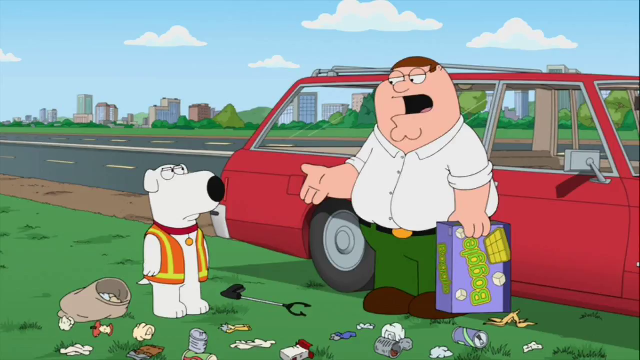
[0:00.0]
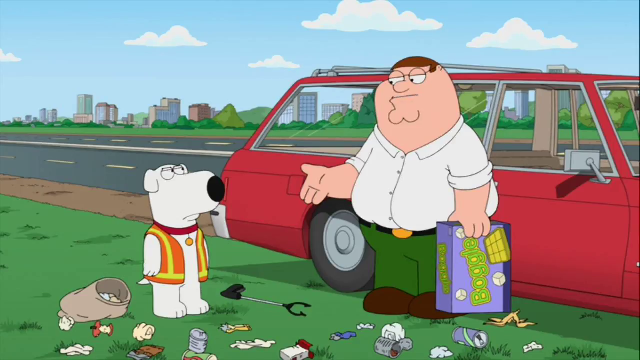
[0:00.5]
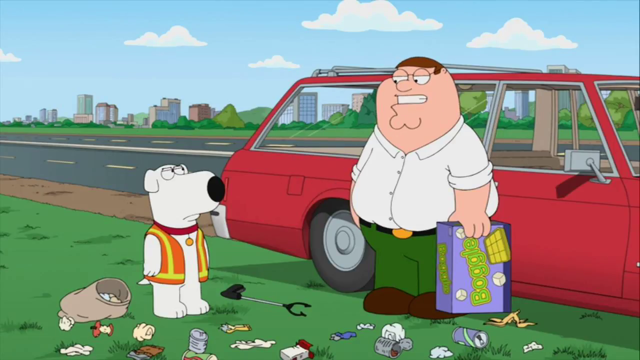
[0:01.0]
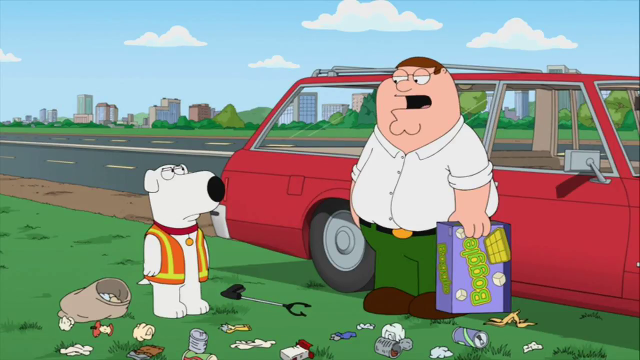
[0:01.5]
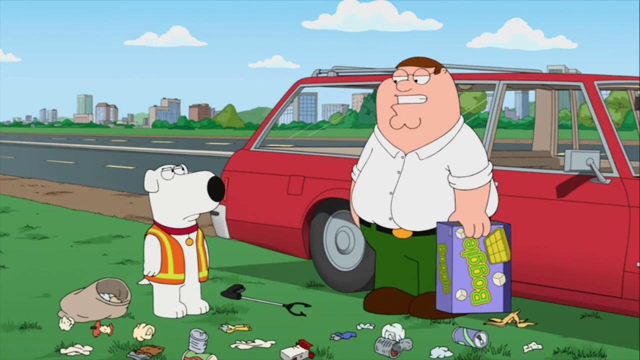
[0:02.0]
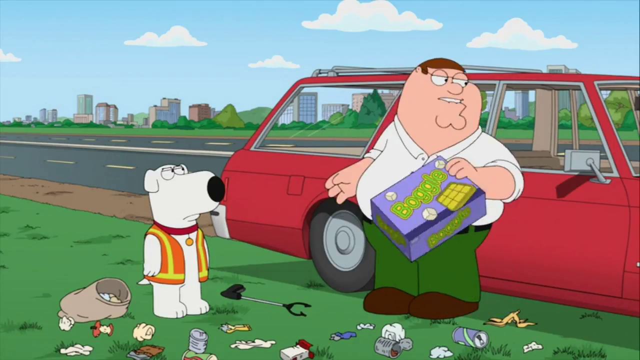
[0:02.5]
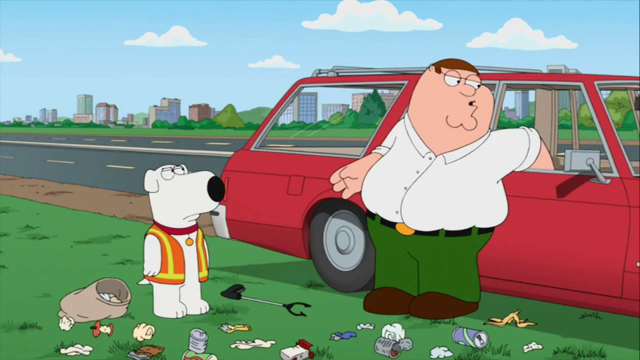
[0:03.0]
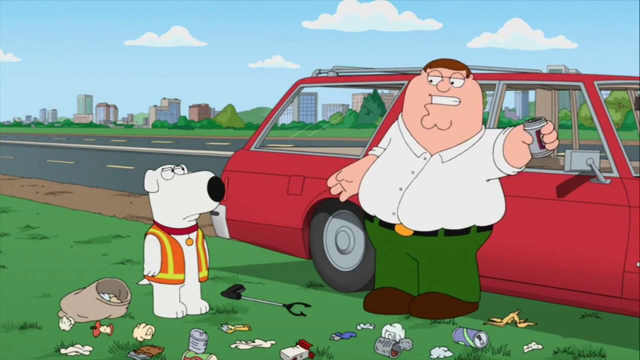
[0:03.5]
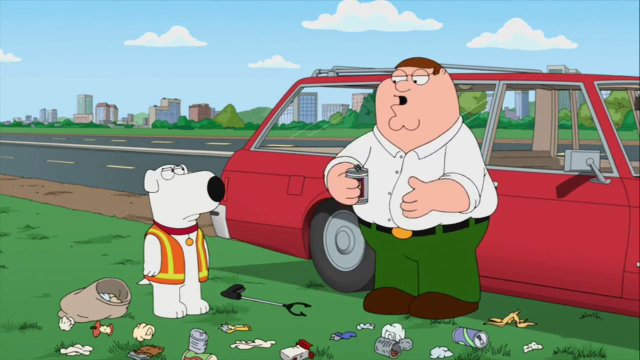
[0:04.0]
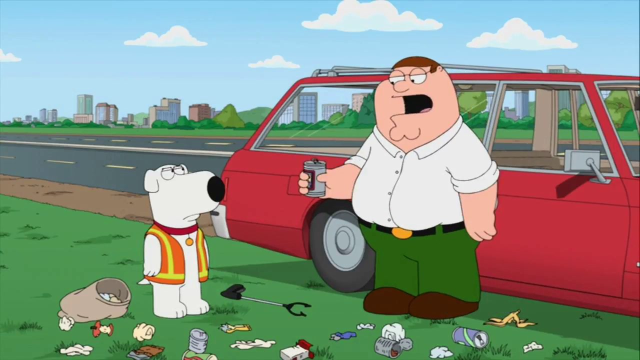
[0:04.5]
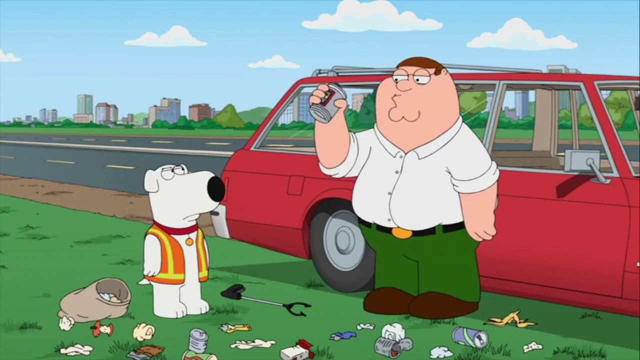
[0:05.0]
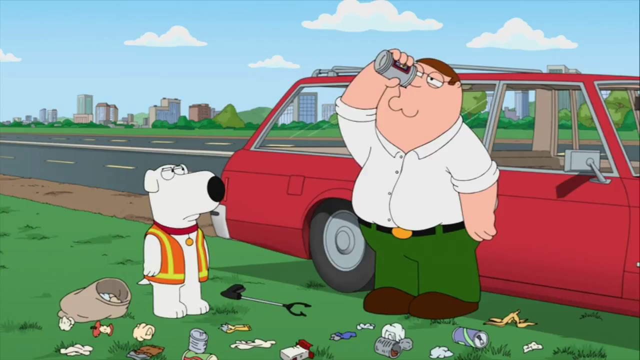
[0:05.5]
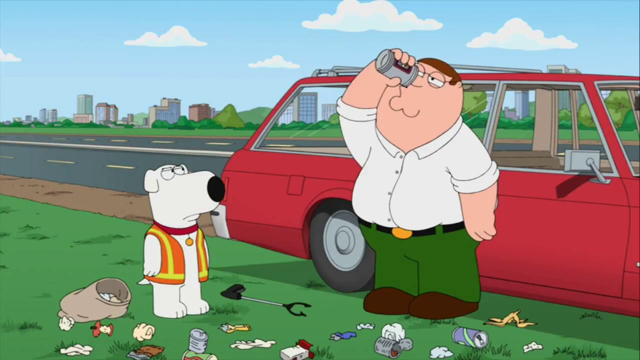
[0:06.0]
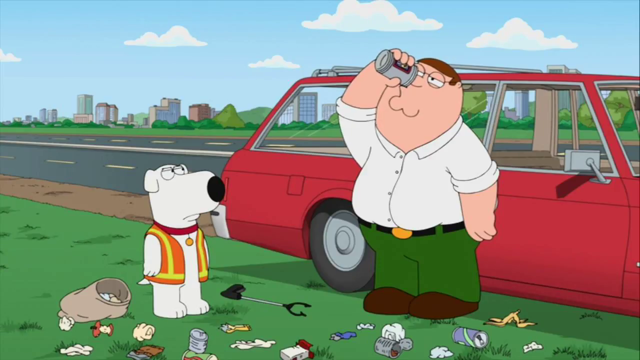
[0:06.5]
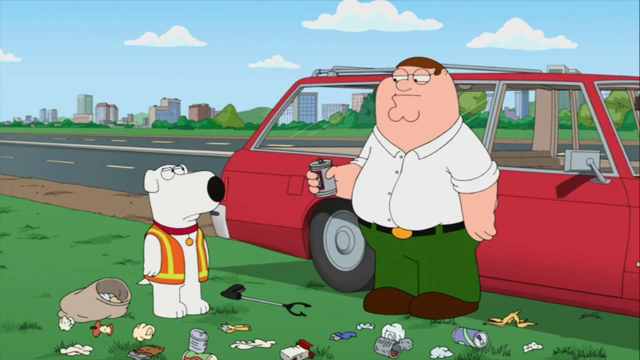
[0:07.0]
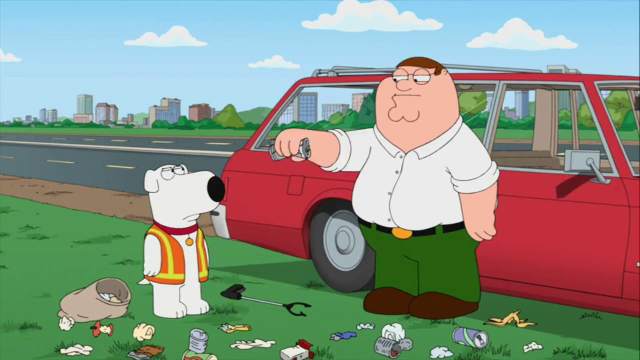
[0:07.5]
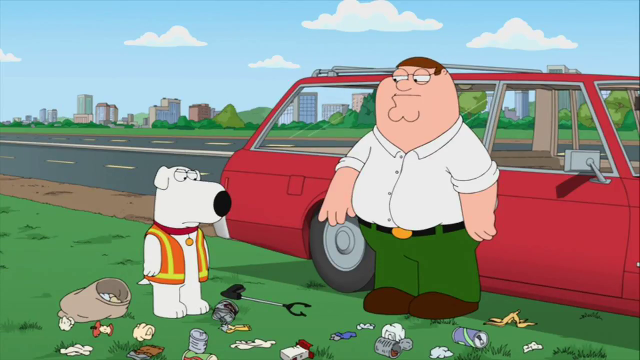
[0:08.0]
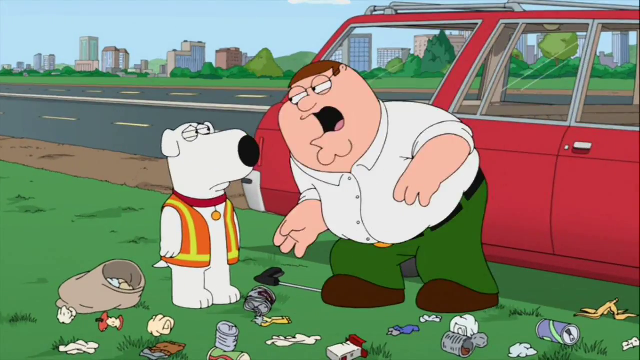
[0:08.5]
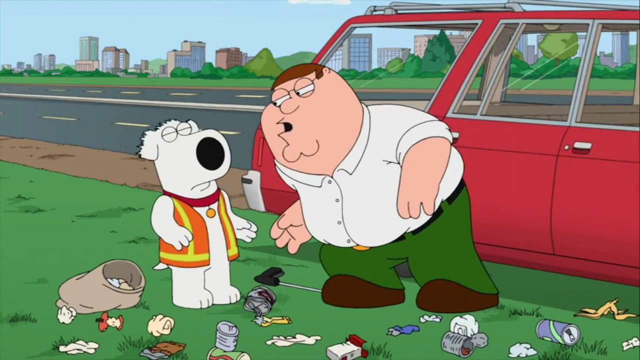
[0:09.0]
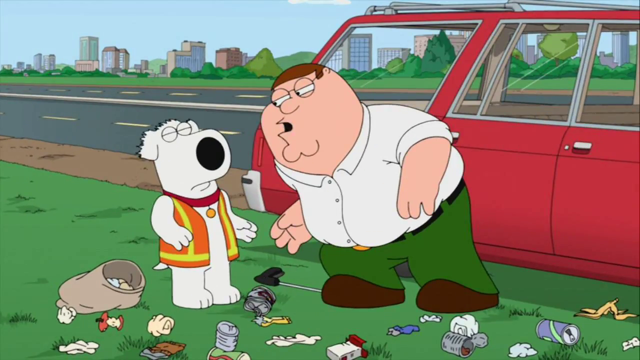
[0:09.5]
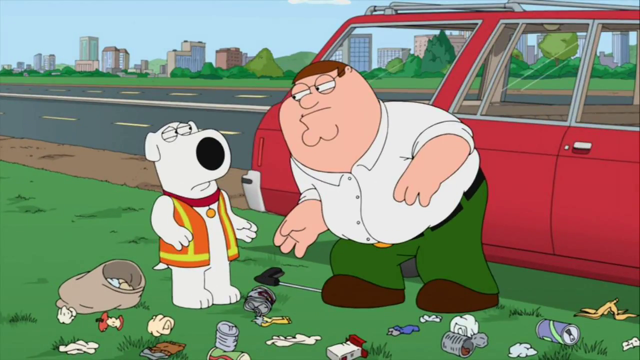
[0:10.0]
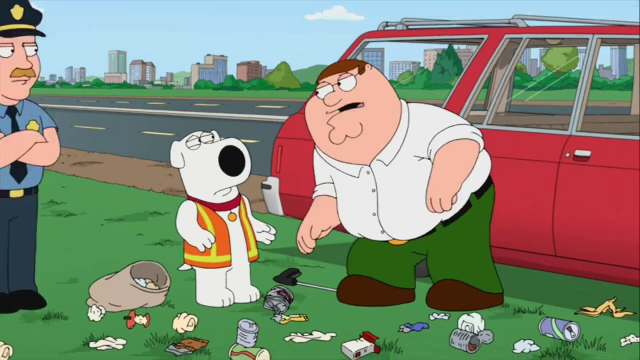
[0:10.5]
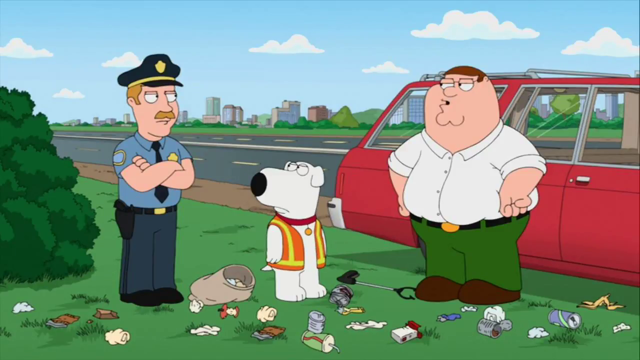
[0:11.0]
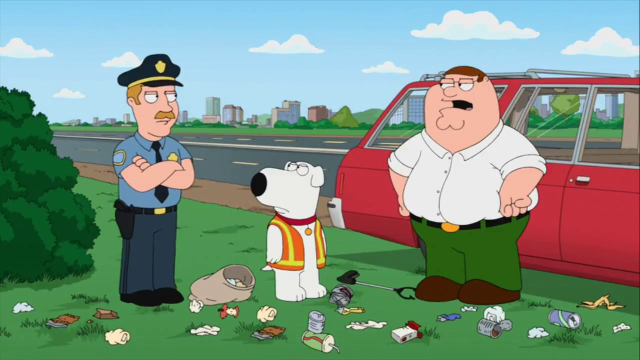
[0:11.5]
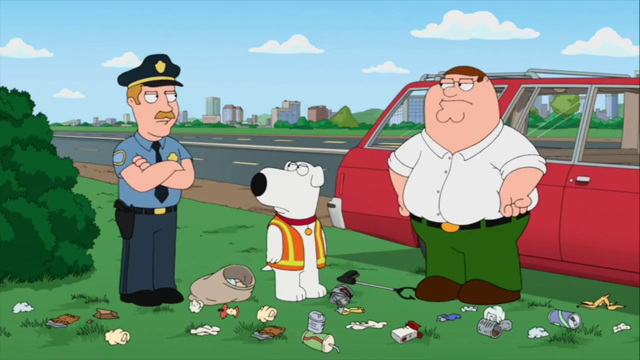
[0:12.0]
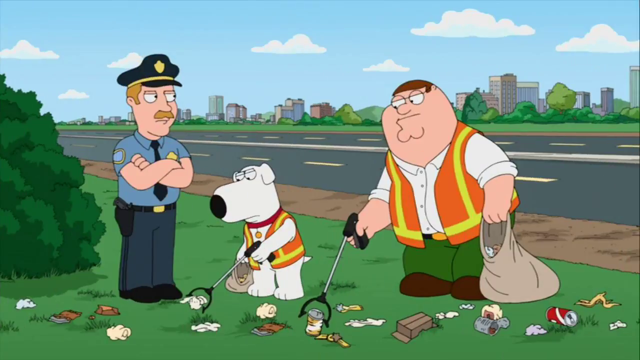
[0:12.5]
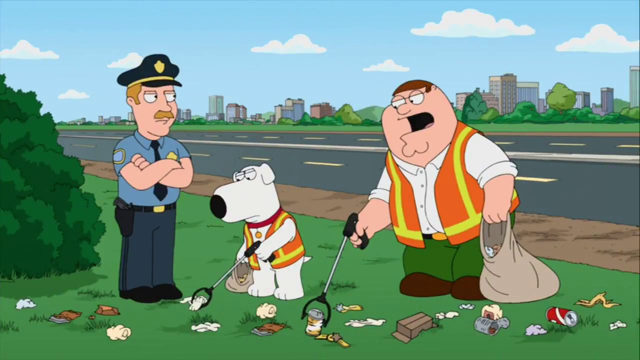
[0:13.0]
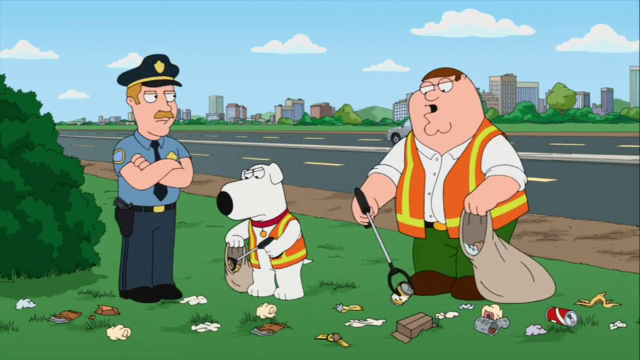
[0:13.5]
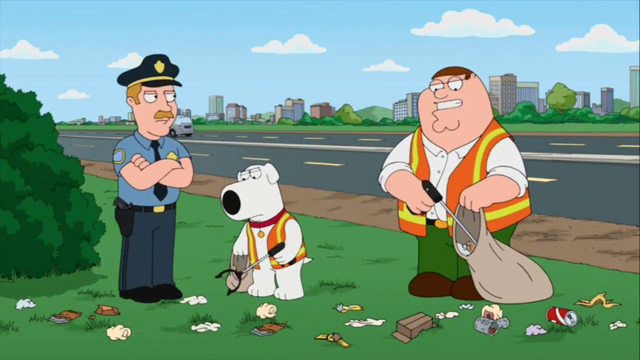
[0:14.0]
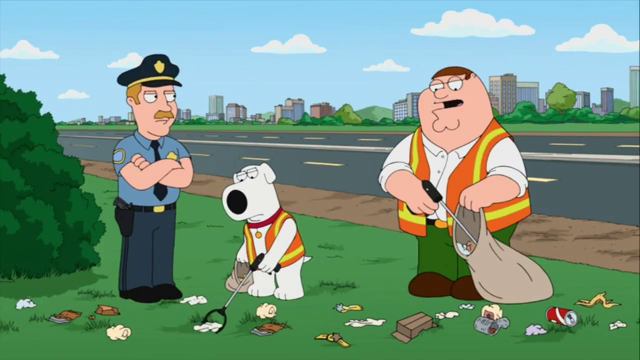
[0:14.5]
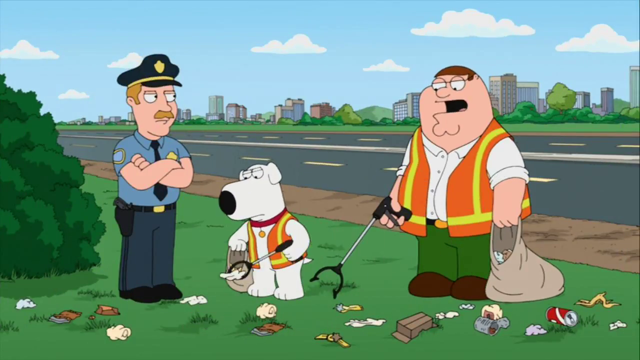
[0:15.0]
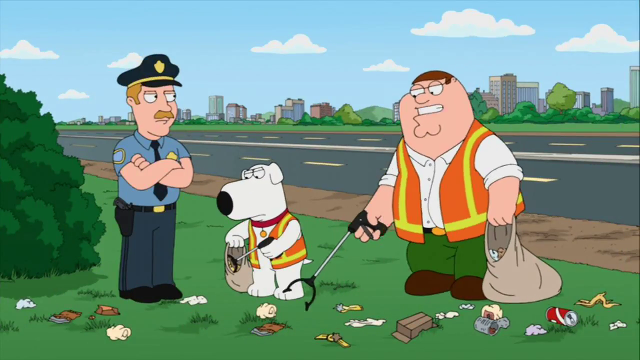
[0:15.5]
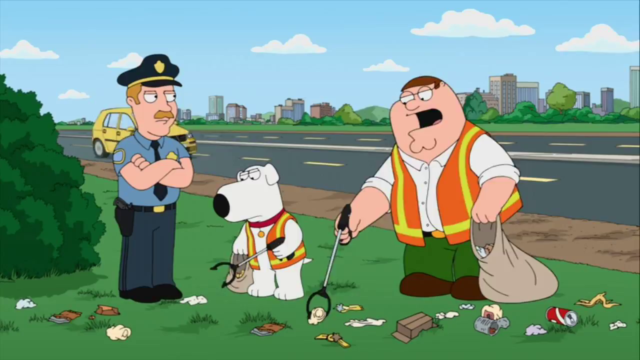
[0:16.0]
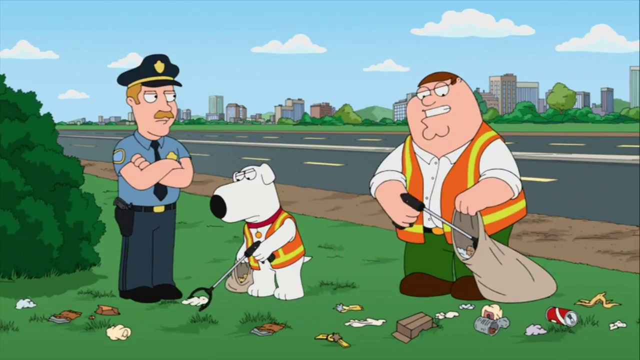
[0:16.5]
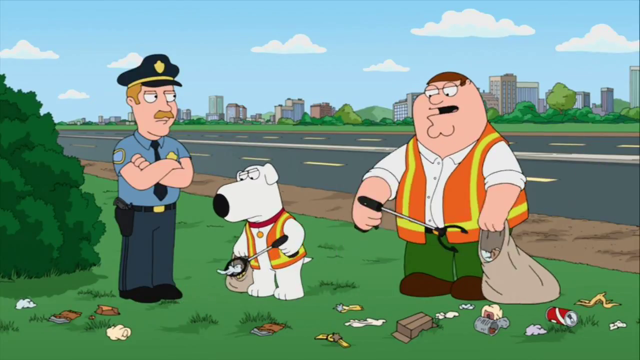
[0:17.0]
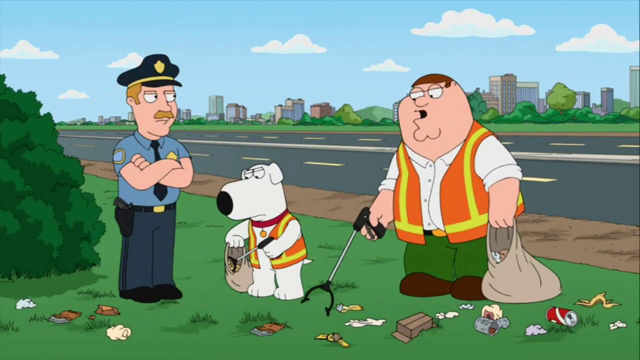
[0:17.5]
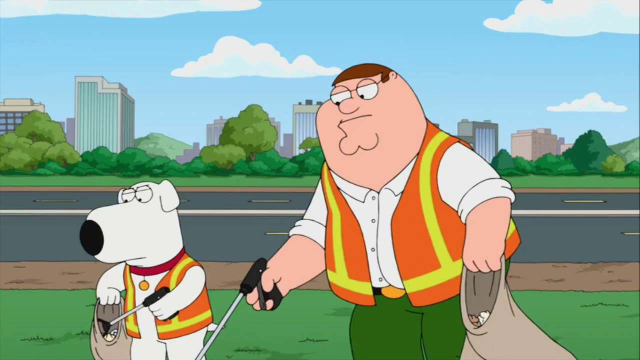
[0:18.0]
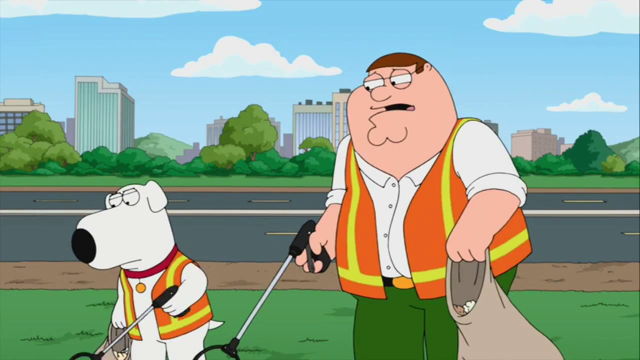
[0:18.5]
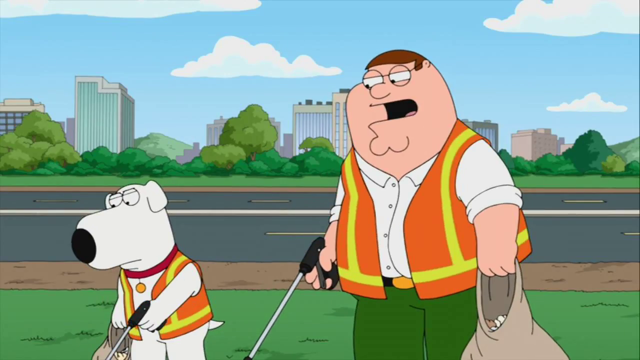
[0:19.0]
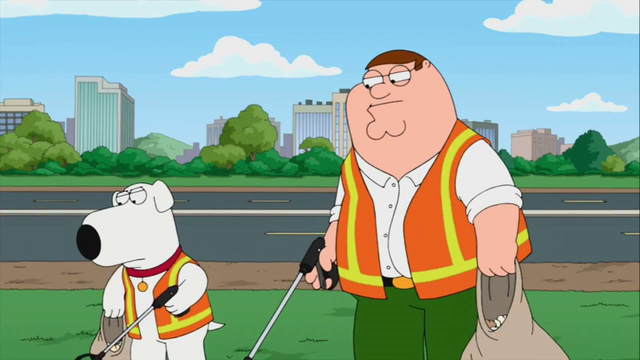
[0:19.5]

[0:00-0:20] An animated dog on the left wears an orange worker's vest with a yellow stripe going down the center on either side. Lots of garbage is on the ground surrounding him, along with an instrument to pick up the garbage. To his left is an animated gentleman who appears to be very large and obese; he wears a white shirt with green pants, has glasses and brown hair, and holds in his left hand what appears to be a game box with the word "BOOGLE" on it. He is standing next to a red station wagon that appears to be pulled off on the interstate. The gentleman has his hands extended but lowers them as he finishes talking to the dog. As he talks, he turns around, puts the game box into the car with his left hand, and pulls out a drink. He drinks it with his right hand, crushes it when he finishes, and throws it to the ground. He then gets his face close to the dog, who backs his head away, and the gentleman runs his mouth very quickly. The camera pans to the left to a police officer in a police uniform, including a cap, a blue shirt with a blue tie, and blue pants, with a badge on his left hand and a gun on his right hip. His arms are crossed as he faces the two other characters. Next, the man and the dog both wear identical orange work vests and hold instruments to pick up trash; they pick up trash and put it in a bag as the large gentleman talks. A yellow car passes by them as they talk and collect trash, while the police officer looks on.